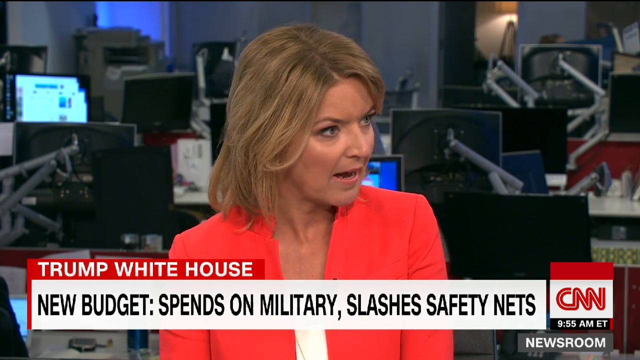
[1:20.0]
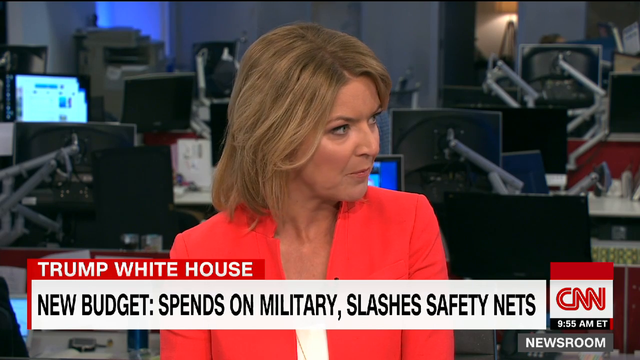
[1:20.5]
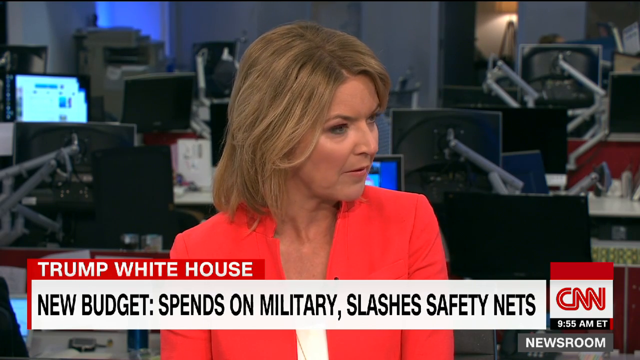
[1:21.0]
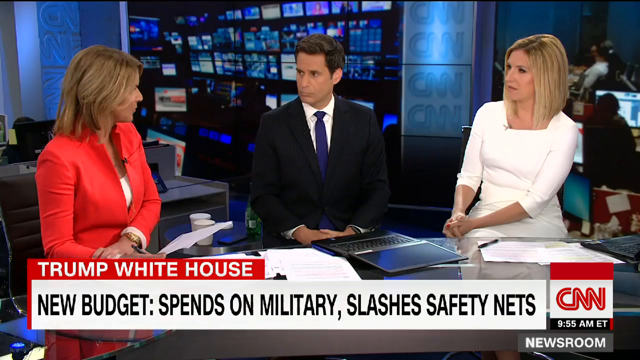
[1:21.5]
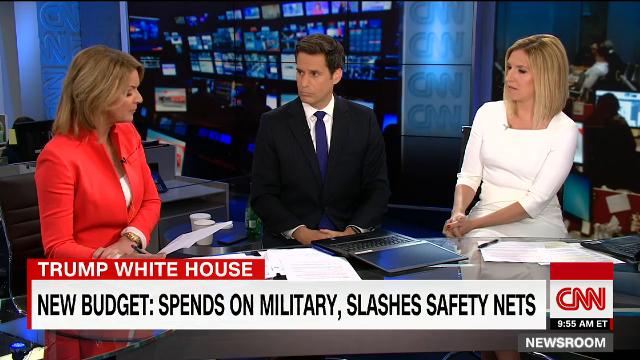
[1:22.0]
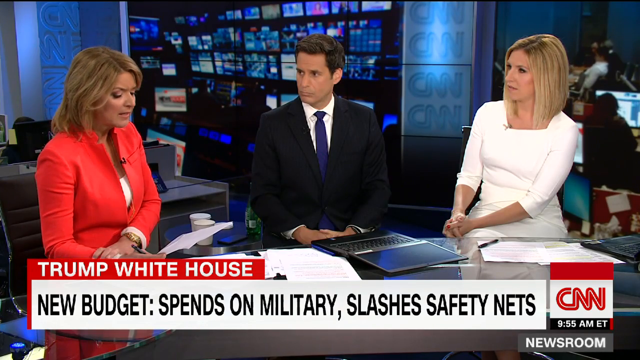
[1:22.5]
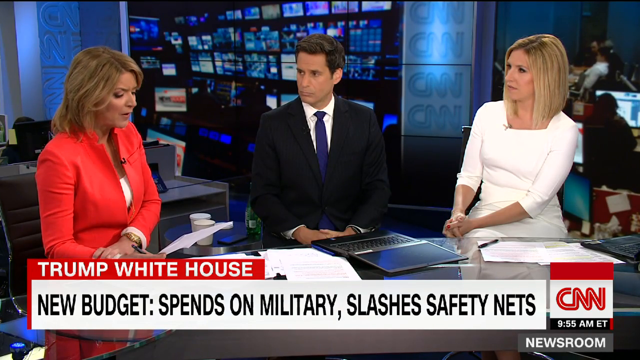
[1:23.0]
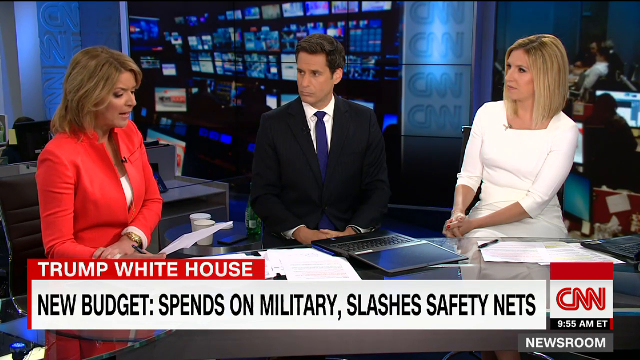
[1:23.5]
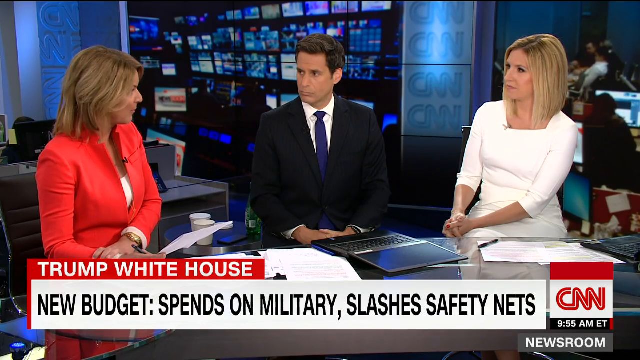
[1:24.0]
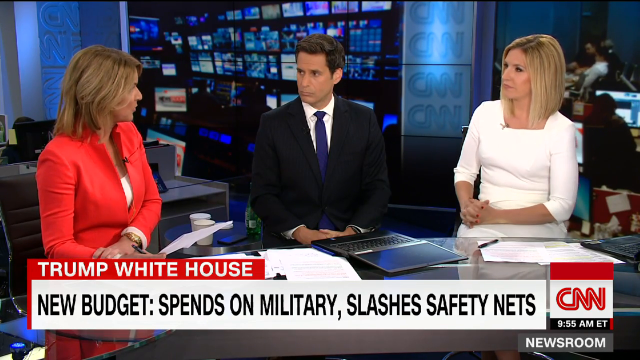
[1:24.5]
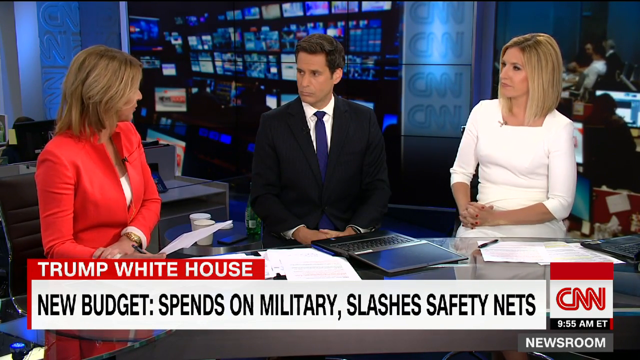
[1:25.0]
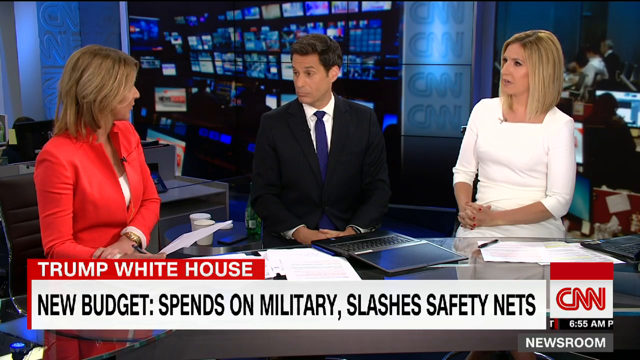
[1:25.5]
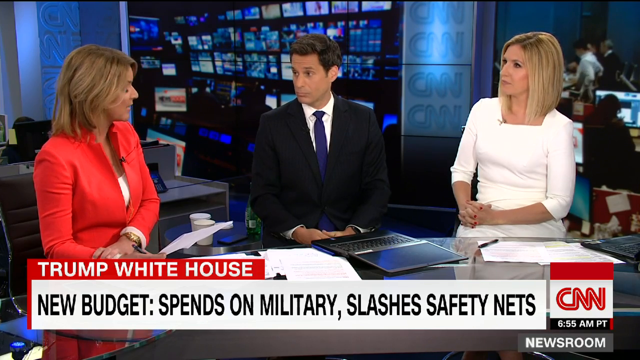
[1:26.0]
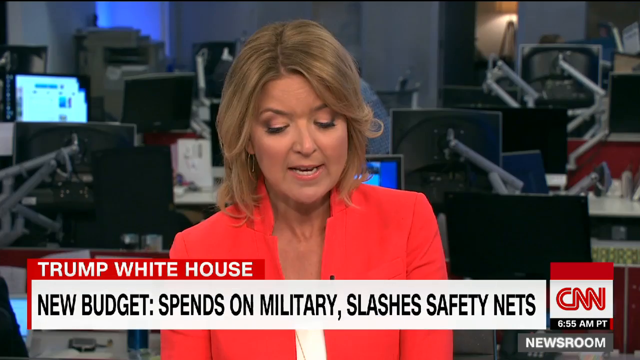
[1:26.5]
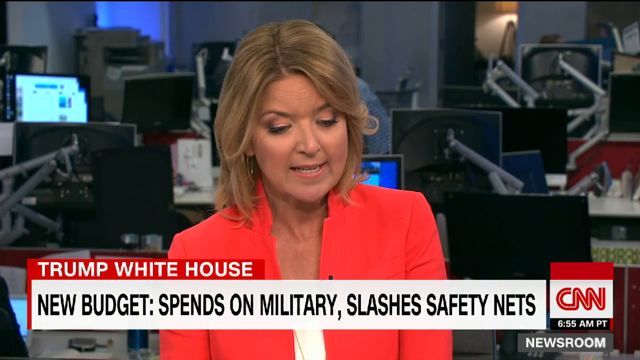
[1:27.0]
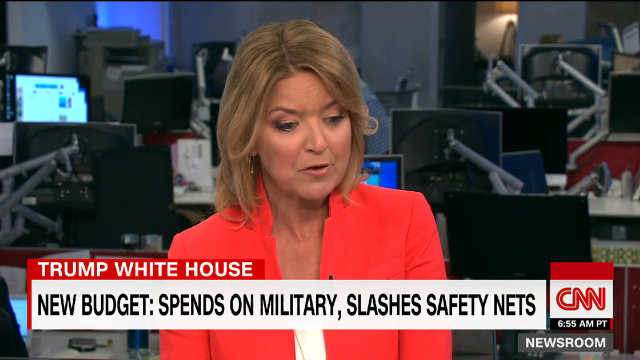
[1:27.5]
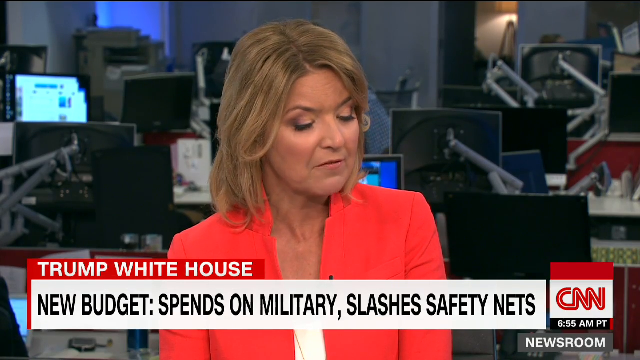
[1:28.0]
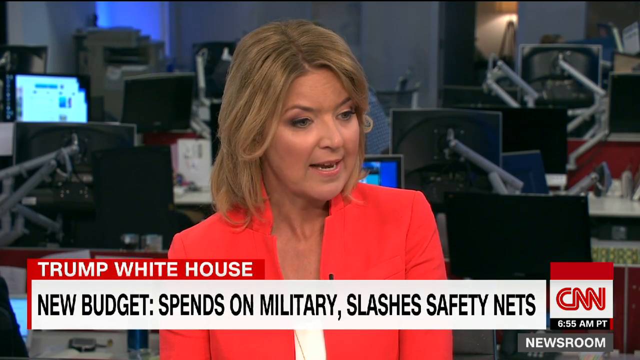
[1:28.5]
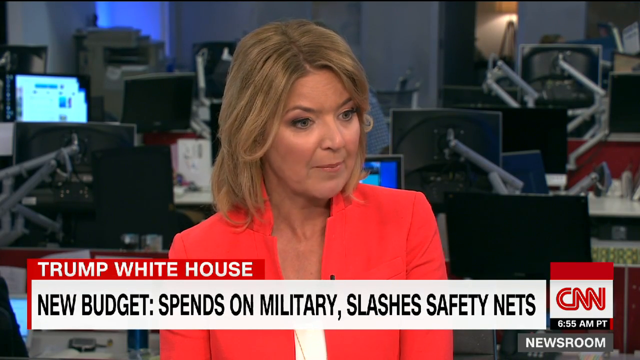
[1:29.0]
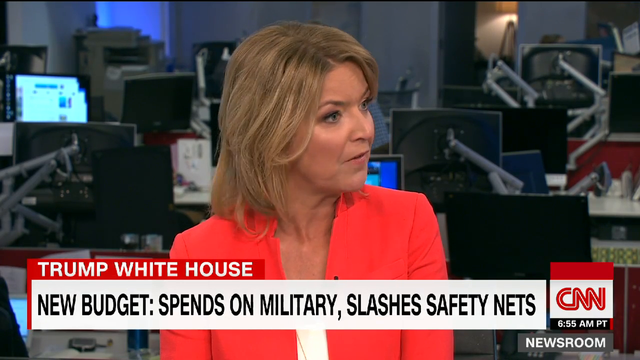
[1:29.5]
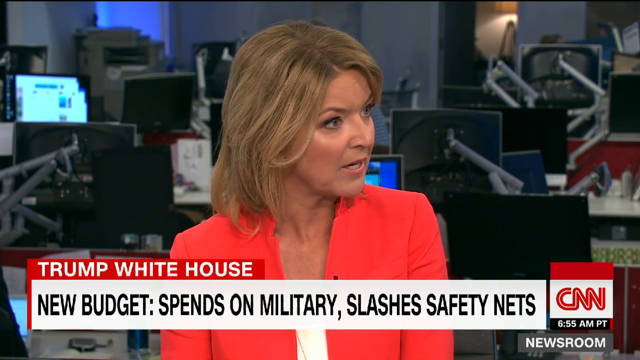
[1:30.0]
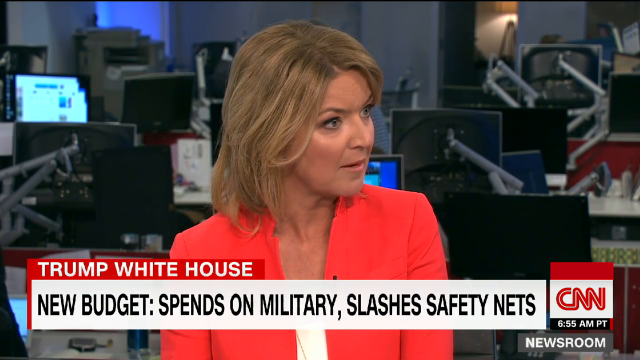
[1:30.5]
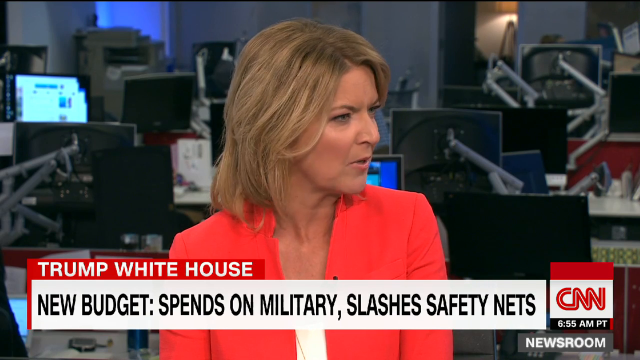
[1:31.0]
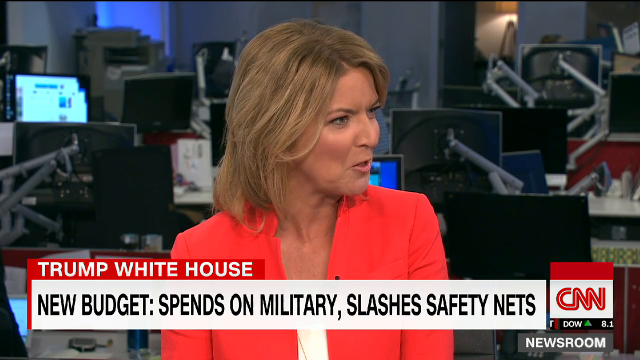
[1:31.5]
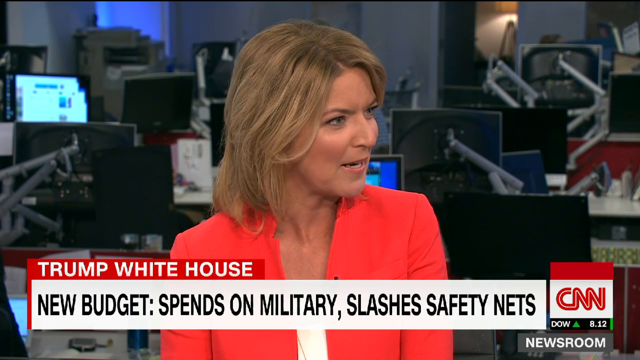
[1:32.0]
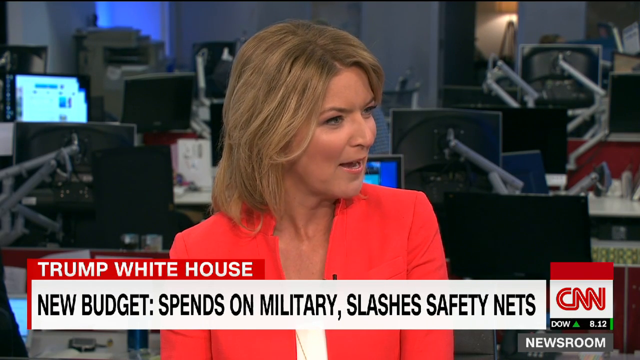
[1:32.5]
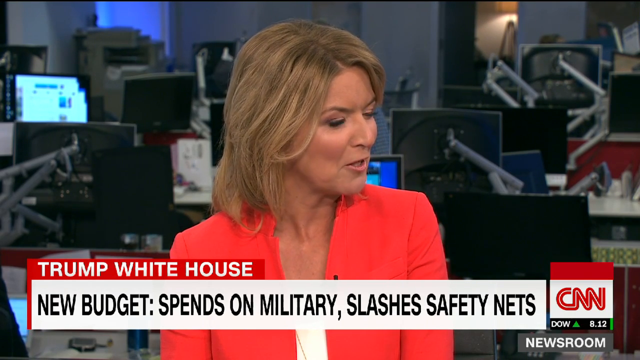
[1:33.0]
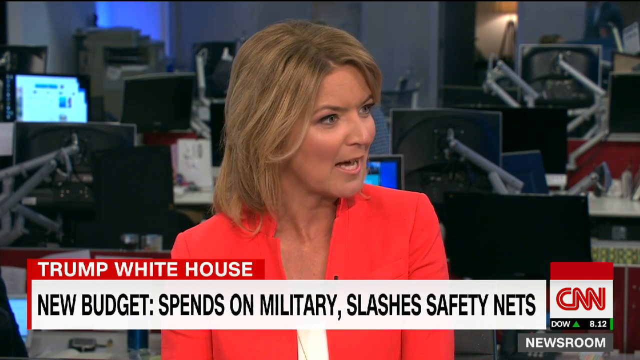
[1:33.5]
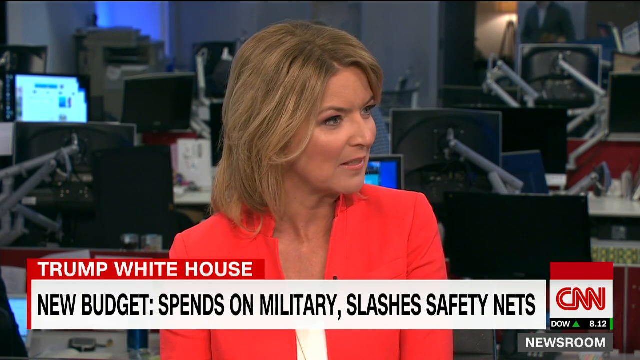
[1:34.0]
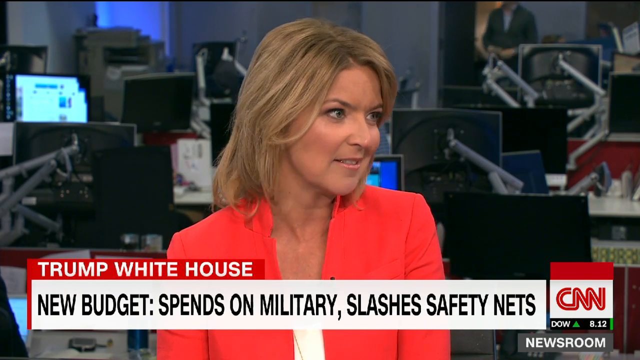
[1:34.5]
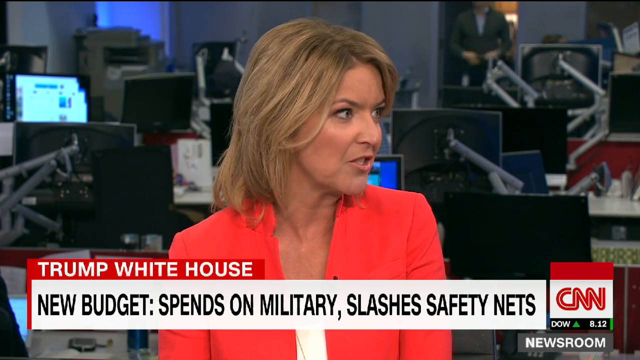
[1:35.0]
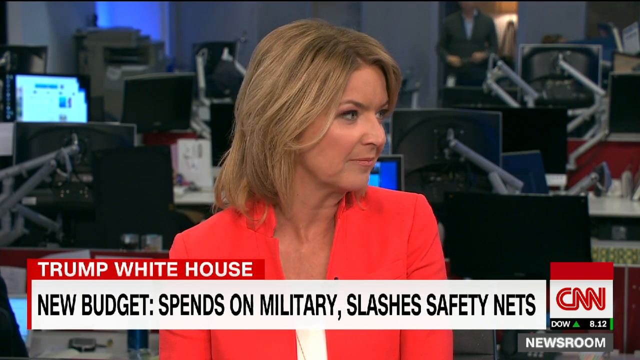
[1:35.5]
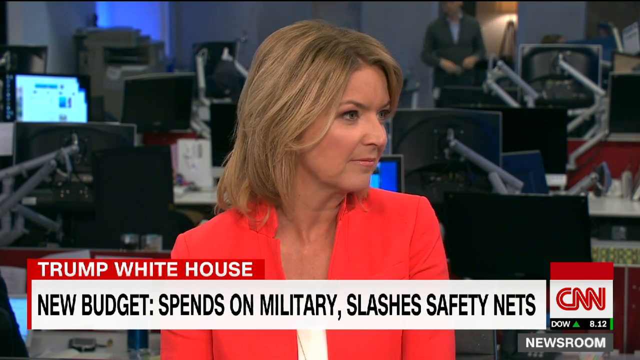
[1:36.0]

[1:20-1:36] Three people are in the newsroom: two women and one man, who appear to be discussing trillions in cuts. A young woman wearing a white dress is shown.